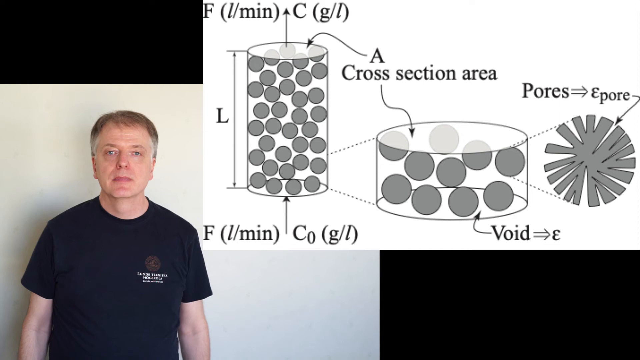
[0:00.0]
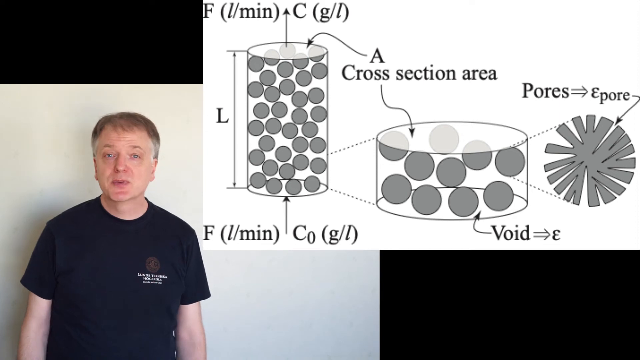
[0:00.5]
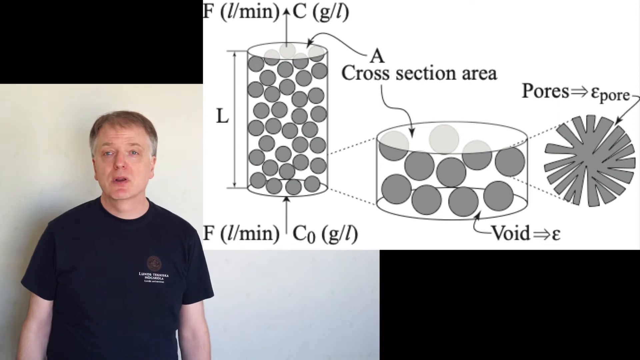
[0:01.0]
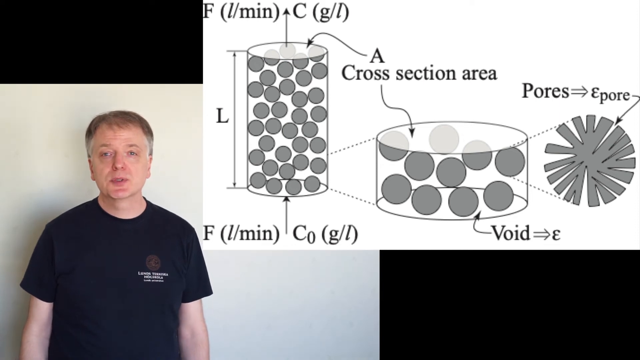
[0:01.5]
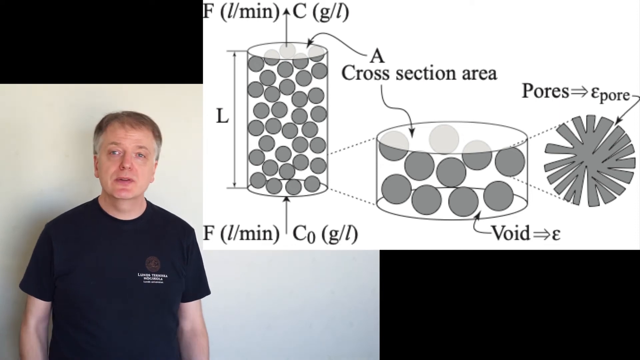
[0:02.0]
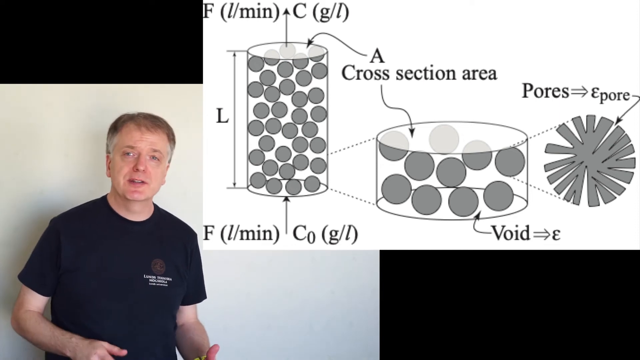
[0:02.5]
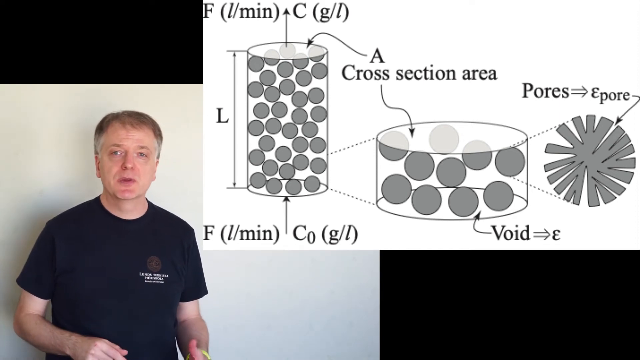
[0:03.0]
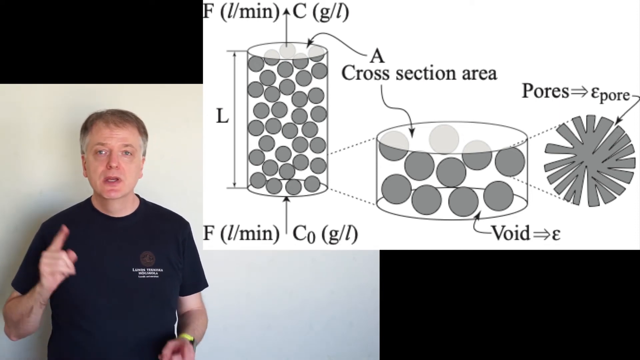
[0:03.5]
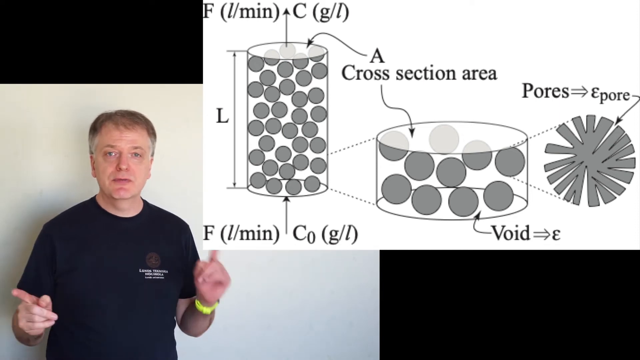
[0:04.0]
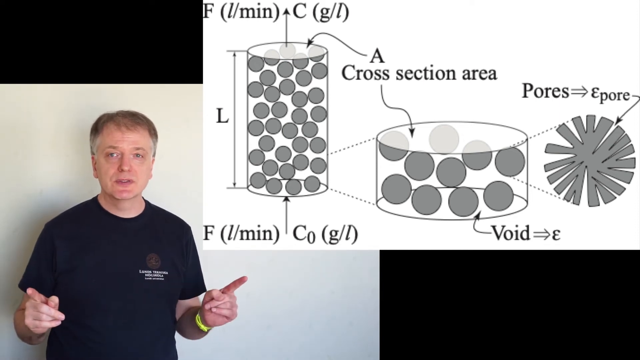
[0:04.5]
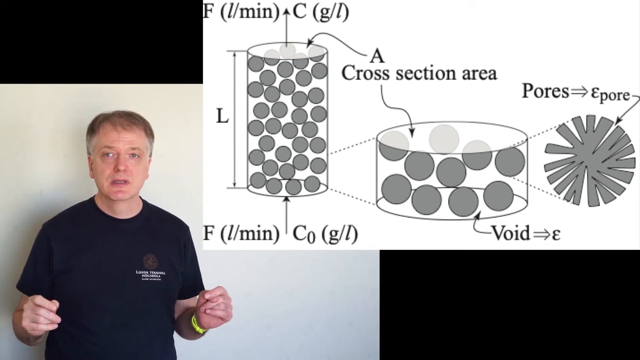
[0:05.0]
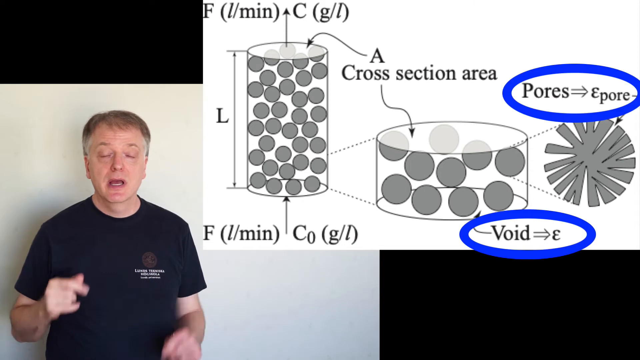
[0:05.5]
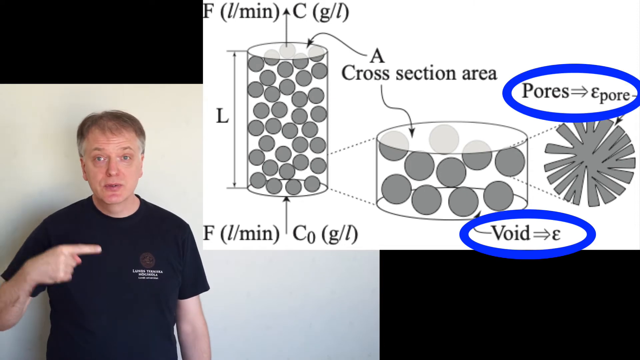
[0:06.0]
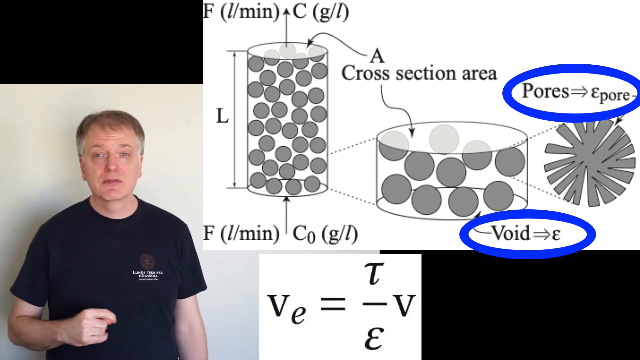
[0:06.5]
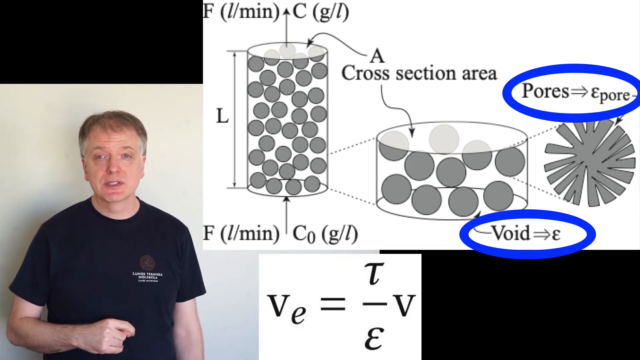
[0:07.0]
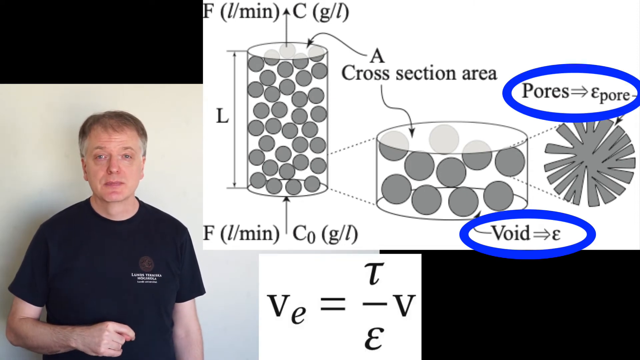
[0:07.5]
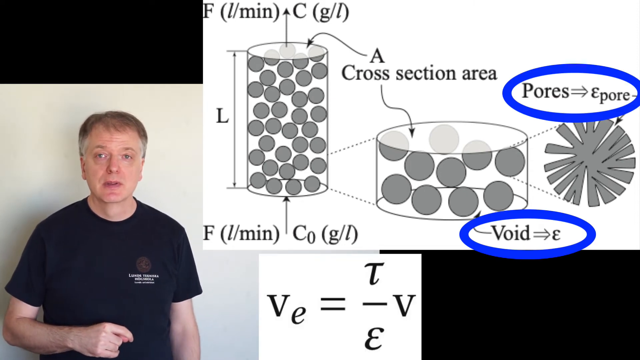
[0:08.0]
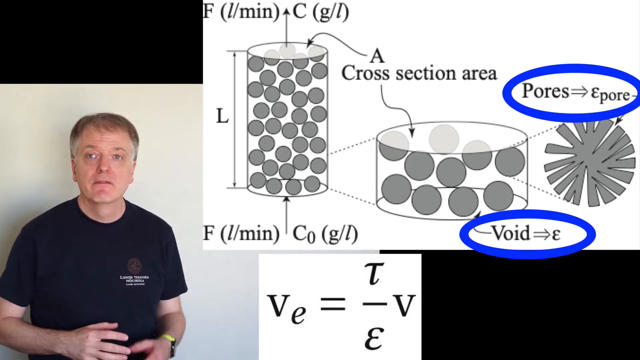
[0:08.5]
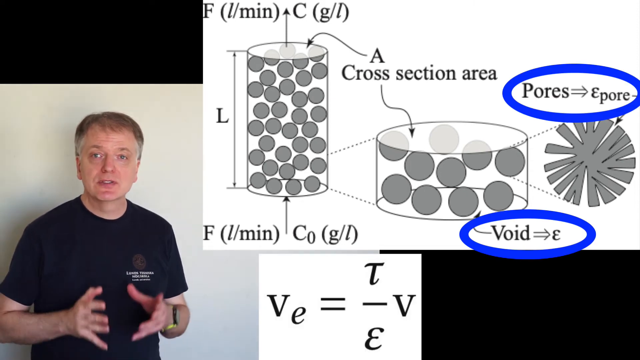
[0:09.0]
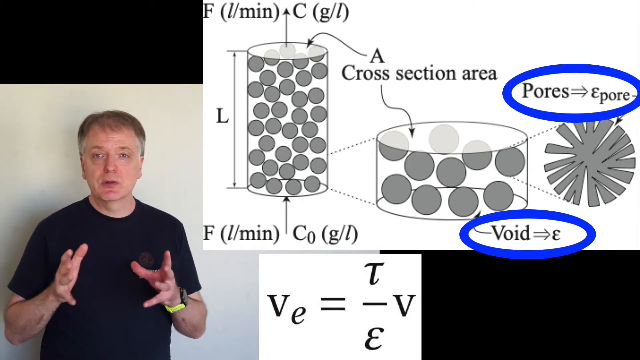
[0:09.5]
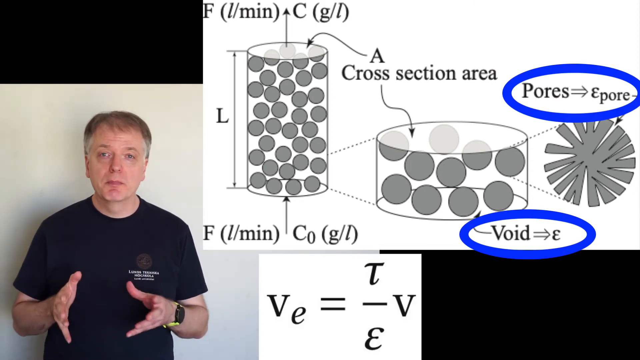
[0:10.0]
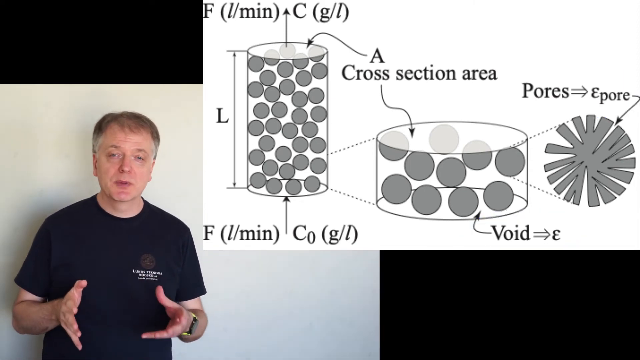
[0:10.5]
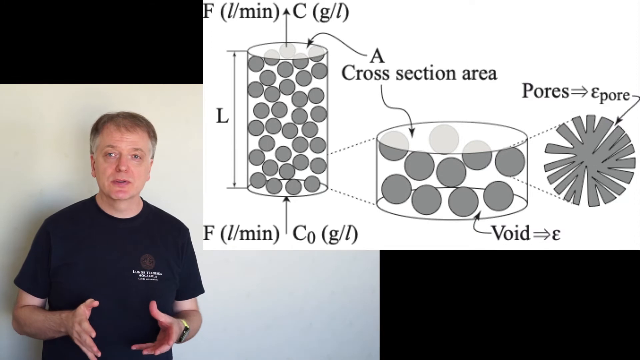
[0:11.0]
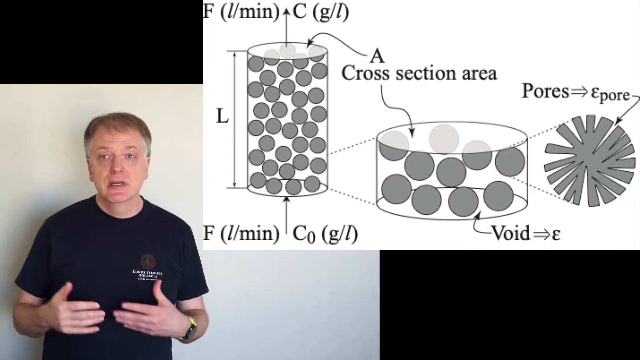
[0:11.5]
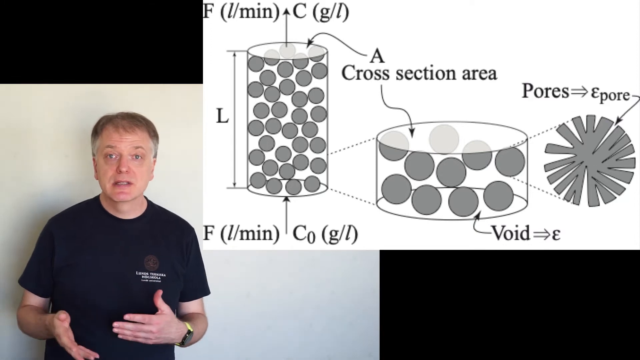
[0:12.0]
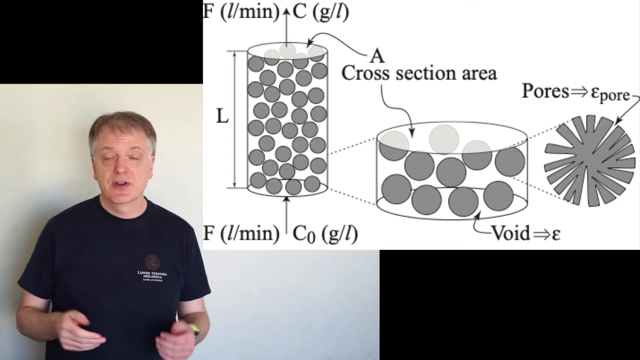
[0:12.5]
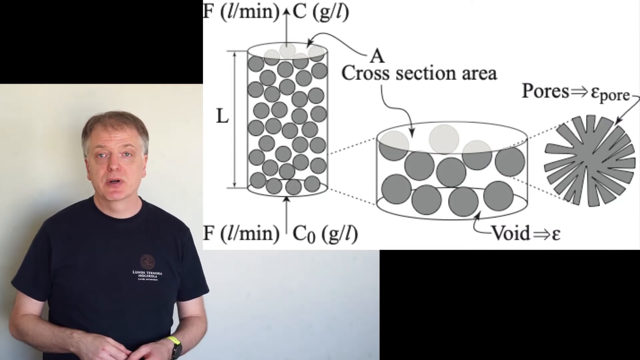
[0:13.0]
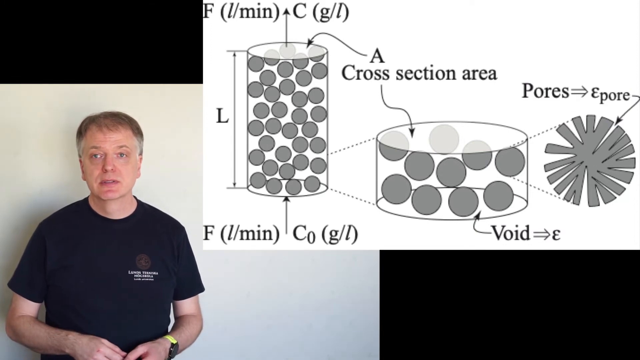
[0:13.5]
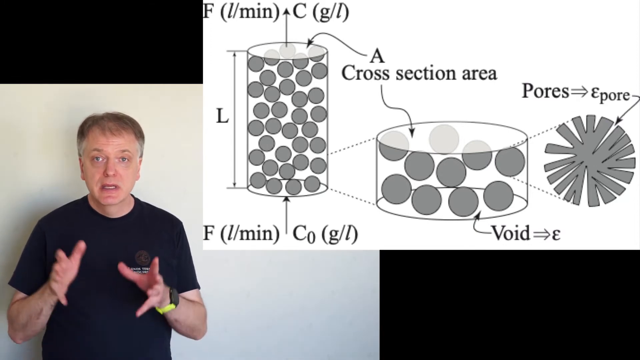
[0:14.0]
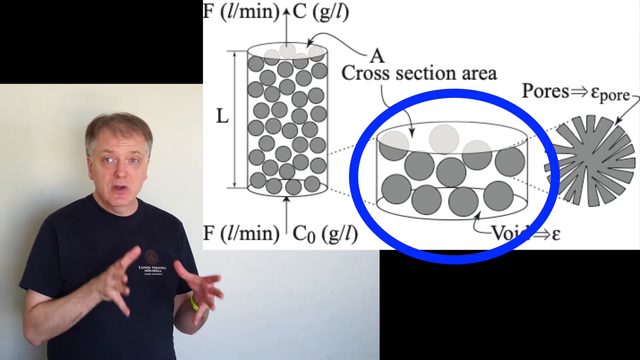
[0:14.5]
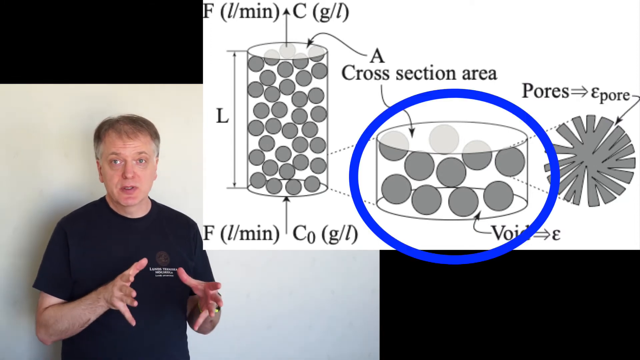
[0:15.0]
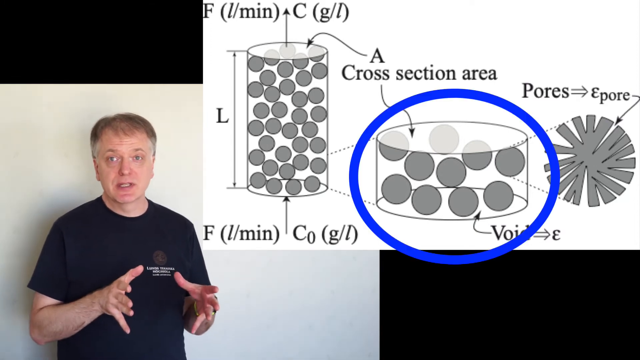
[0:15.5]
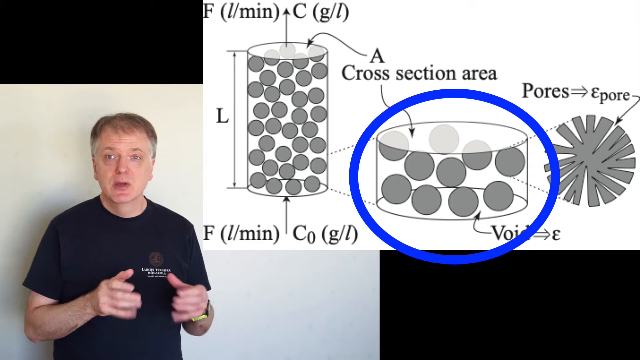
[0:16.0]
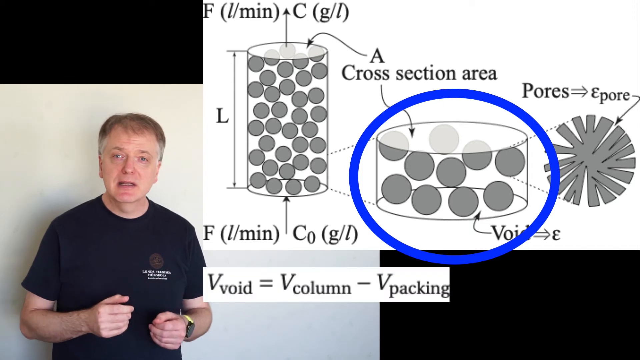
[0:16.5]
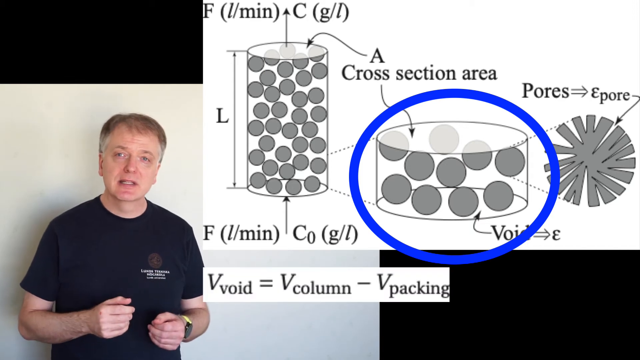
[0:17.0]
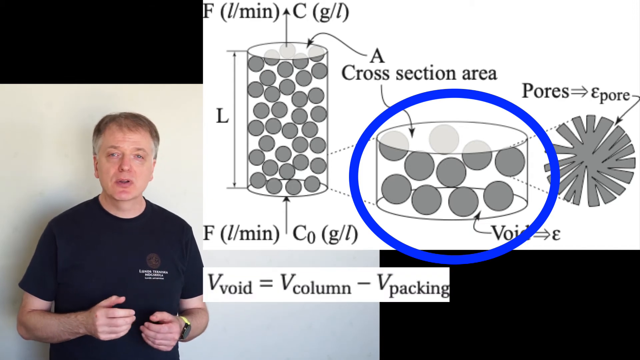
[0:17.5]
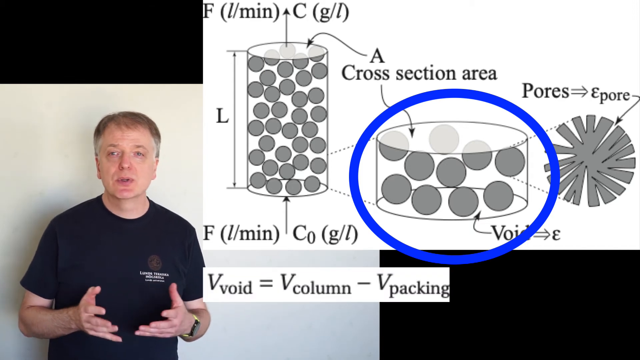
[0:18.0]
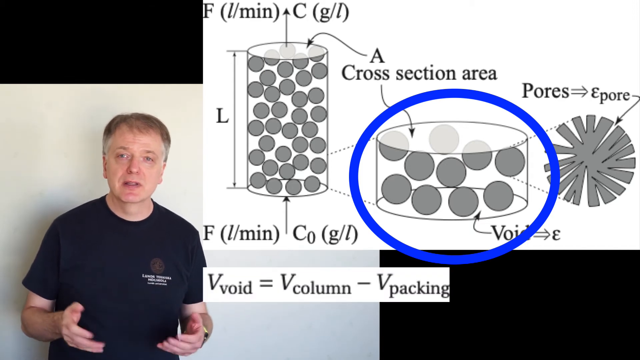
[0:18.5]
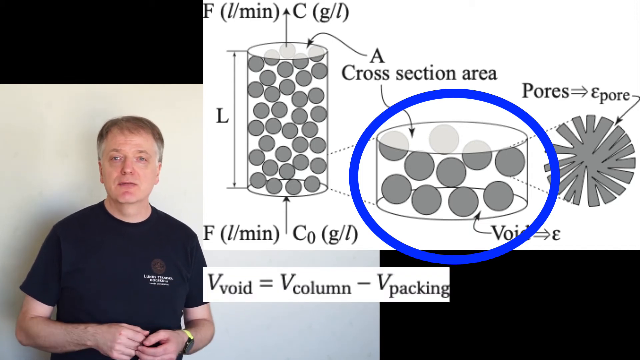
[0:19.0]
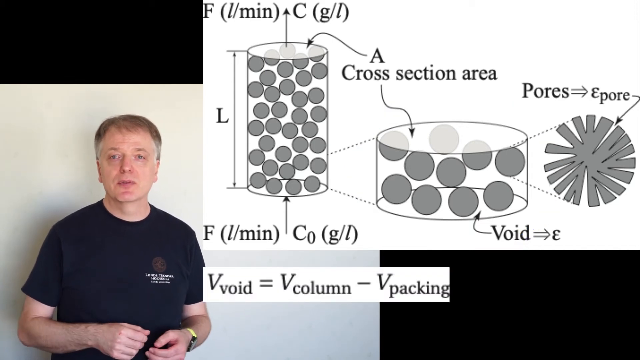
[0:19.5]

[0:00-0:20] A man stands against a white wall in the lower left-hand corner of the frame. Above him toward the right are some pictures, including a cylinder drawn in black, gray and white, with an arrow pointing up and an arrow from the bottom. Text reads "F-L-min", along with "C-O" and "G-L", an "A" at the top, "cross-section area" and "void"; the drawing shows pores, and "E-pore" is written on the side. The man points a finger up toward the drawing, and then someone circles the word "pores" with a blue oval; the word "void" is also circled in blue. A math problem appears in the lower middle, involving a V with a lowercase e. Then someone puts a blue circle around the cross-section A, and text reads "V void equals V column minus V packing".